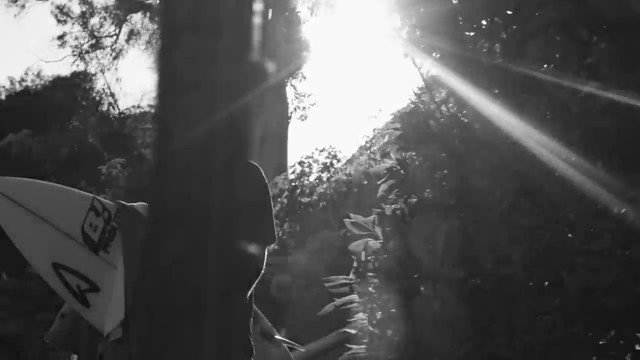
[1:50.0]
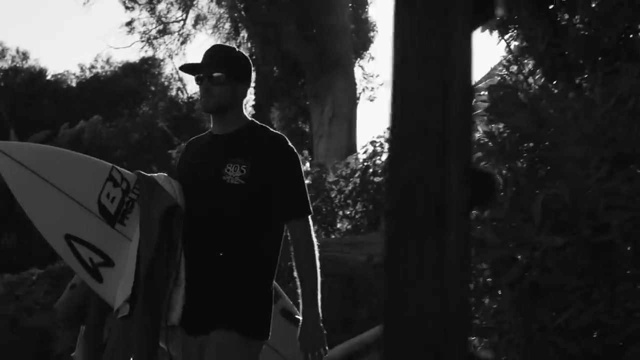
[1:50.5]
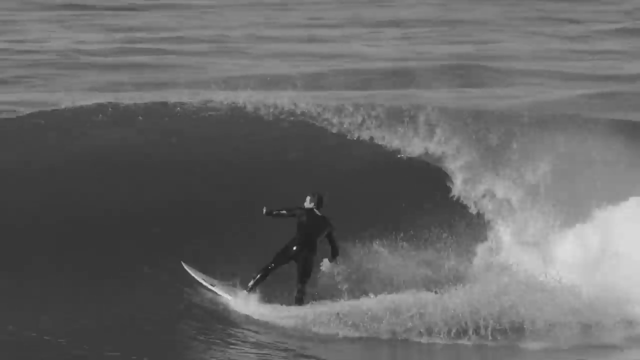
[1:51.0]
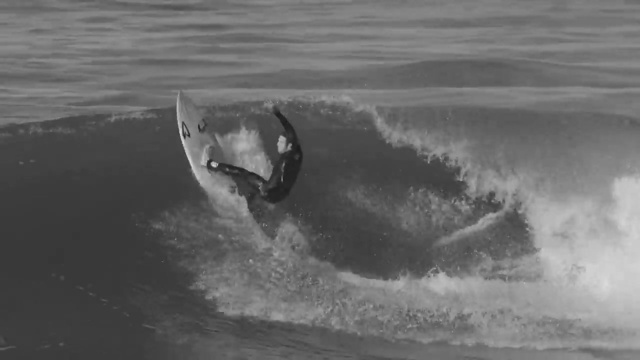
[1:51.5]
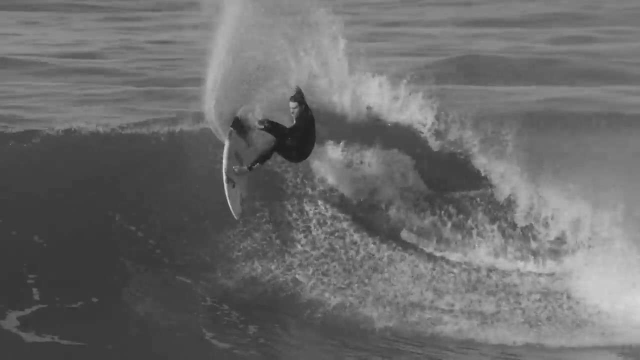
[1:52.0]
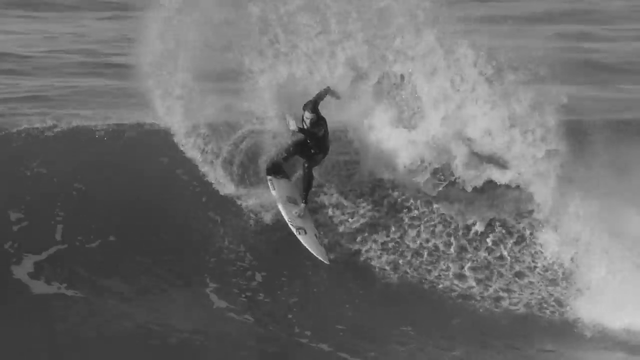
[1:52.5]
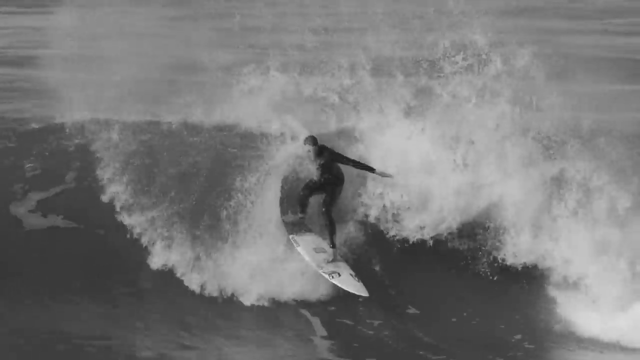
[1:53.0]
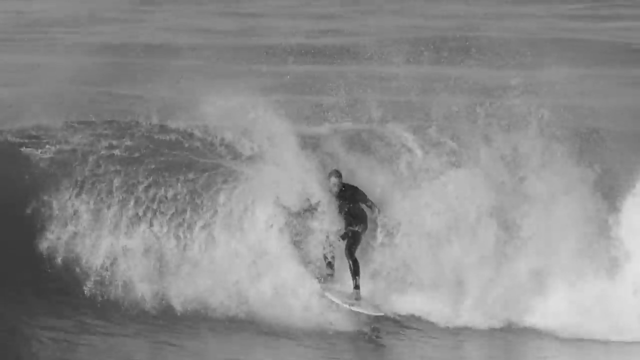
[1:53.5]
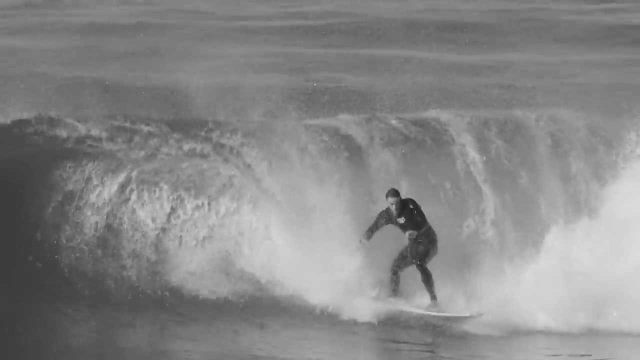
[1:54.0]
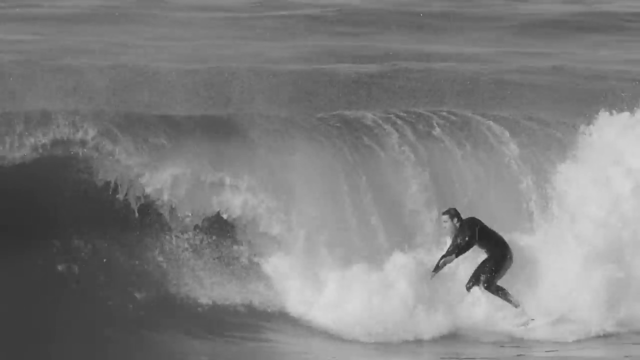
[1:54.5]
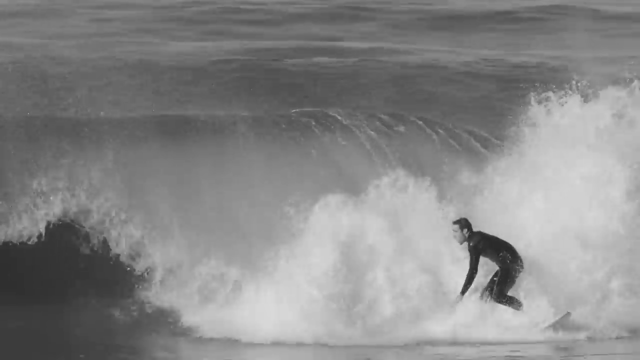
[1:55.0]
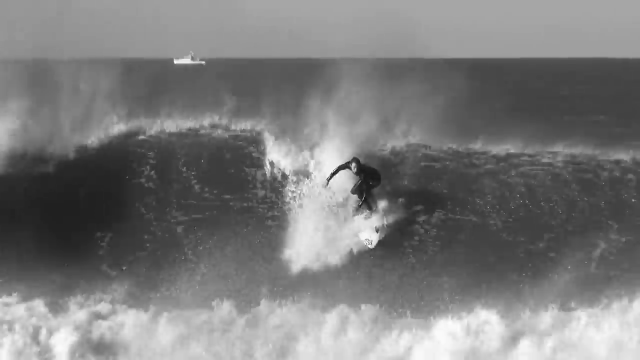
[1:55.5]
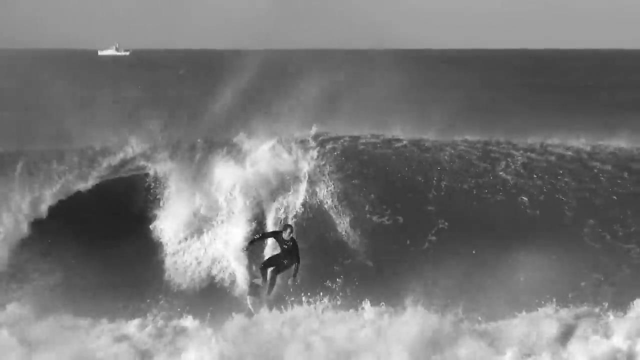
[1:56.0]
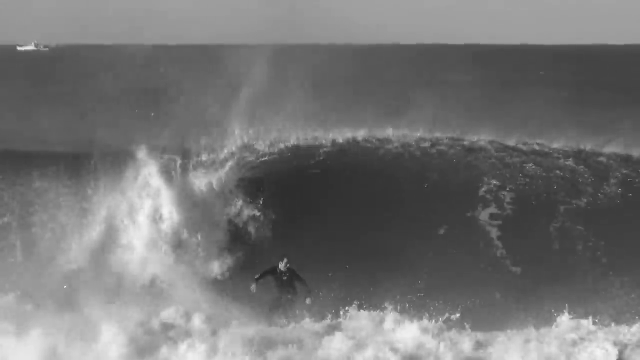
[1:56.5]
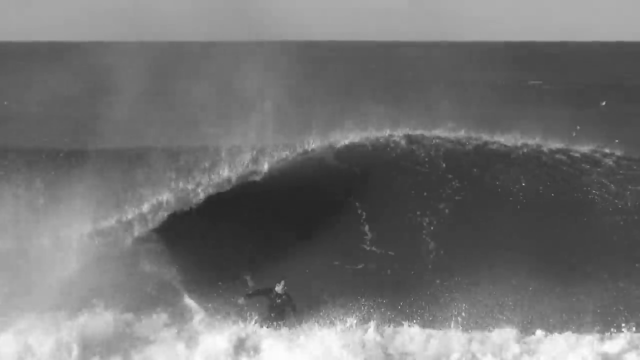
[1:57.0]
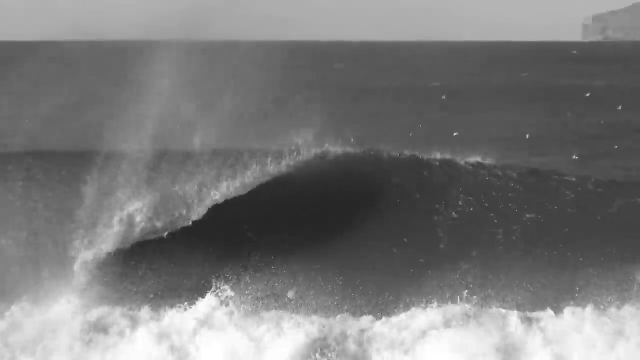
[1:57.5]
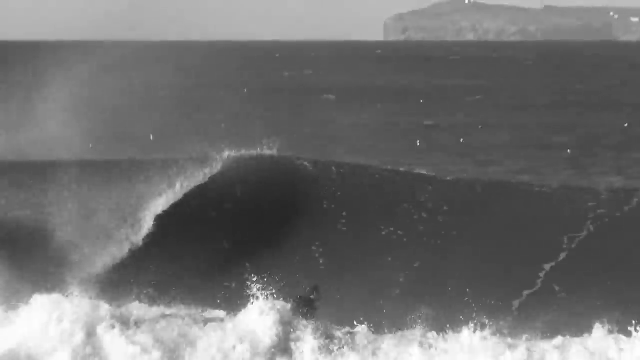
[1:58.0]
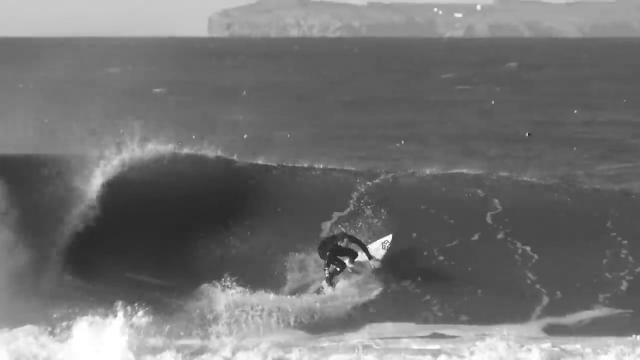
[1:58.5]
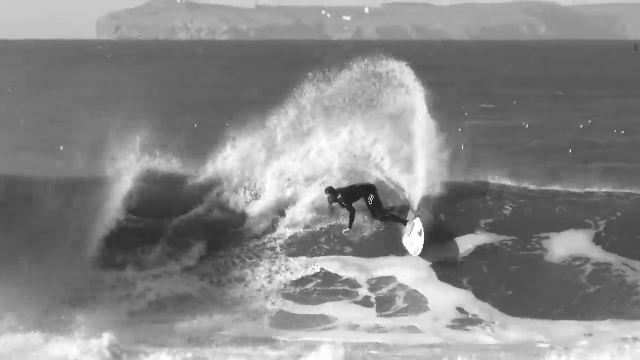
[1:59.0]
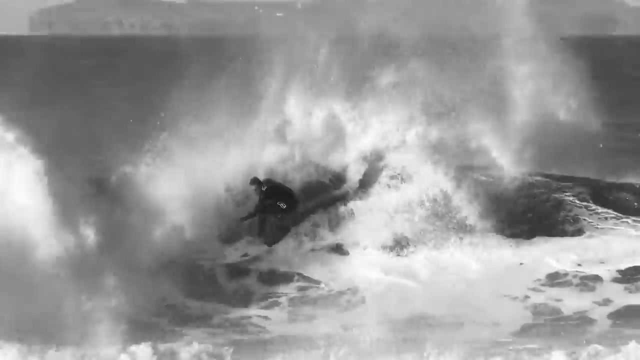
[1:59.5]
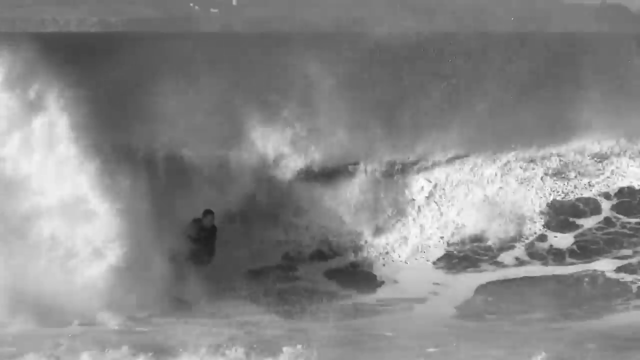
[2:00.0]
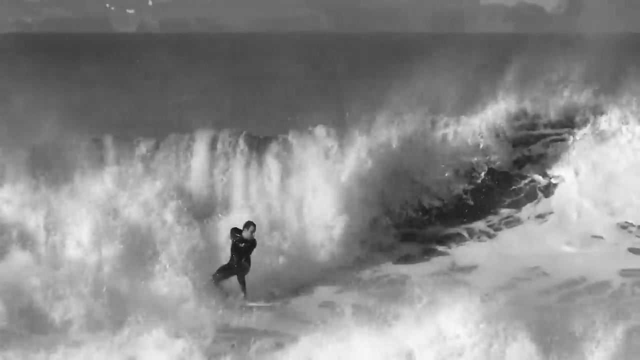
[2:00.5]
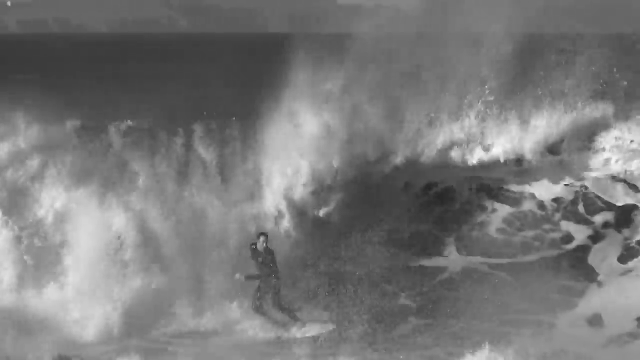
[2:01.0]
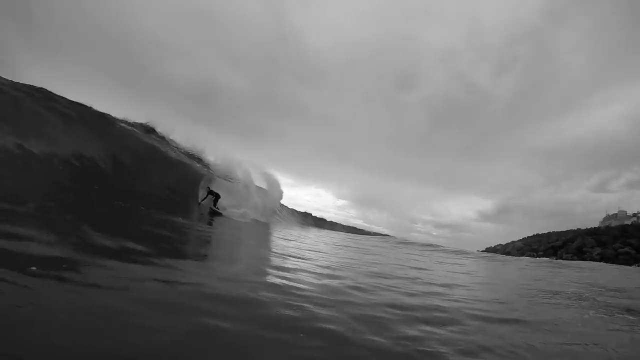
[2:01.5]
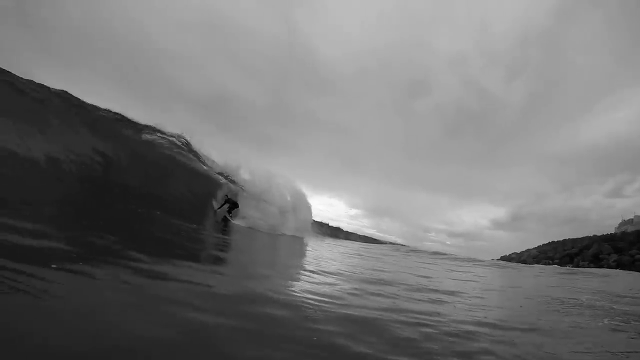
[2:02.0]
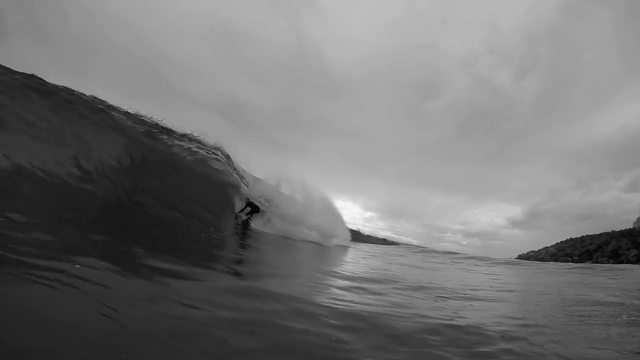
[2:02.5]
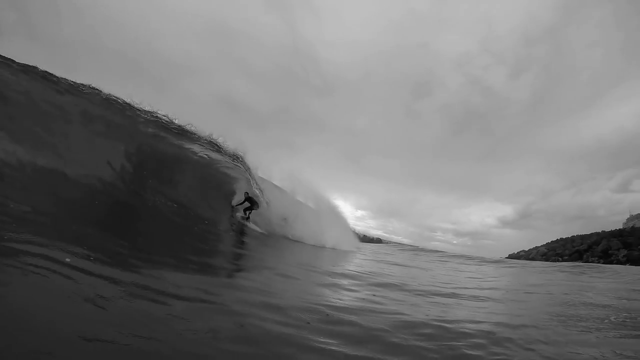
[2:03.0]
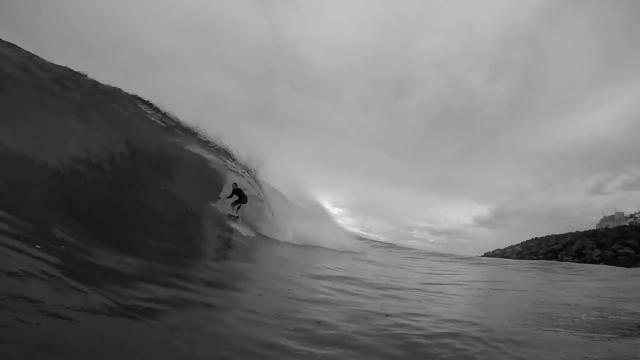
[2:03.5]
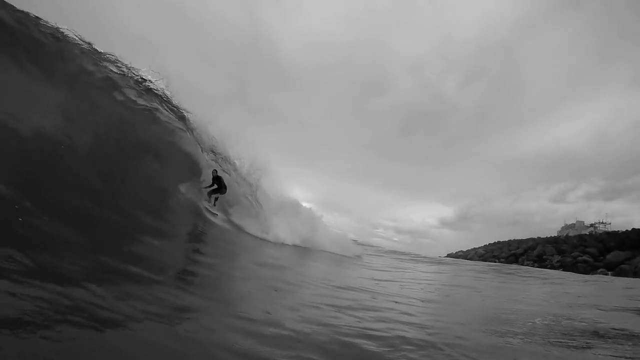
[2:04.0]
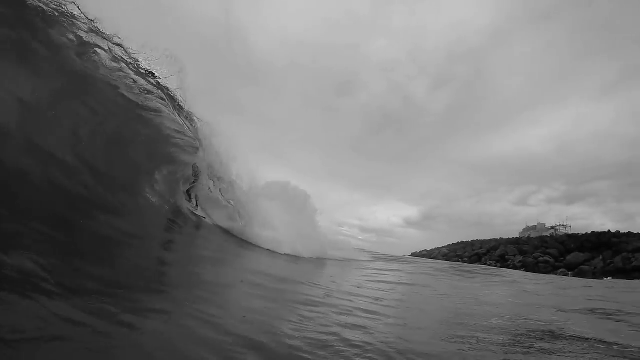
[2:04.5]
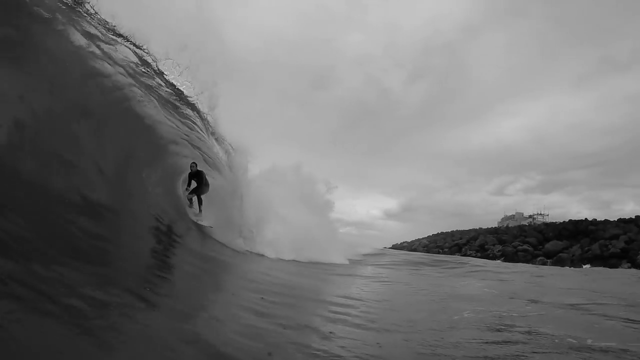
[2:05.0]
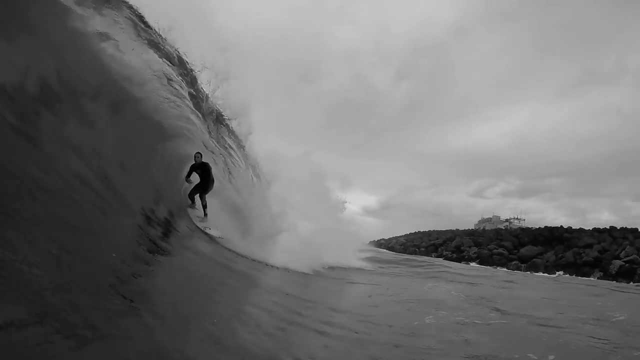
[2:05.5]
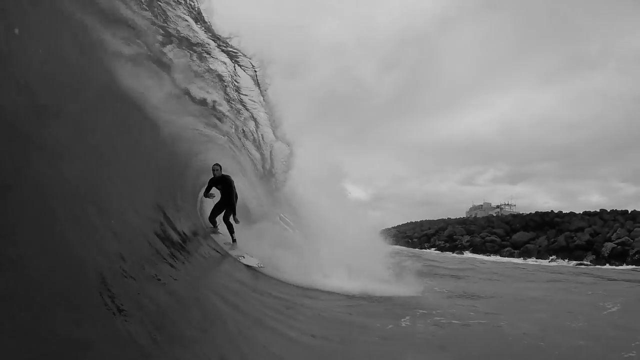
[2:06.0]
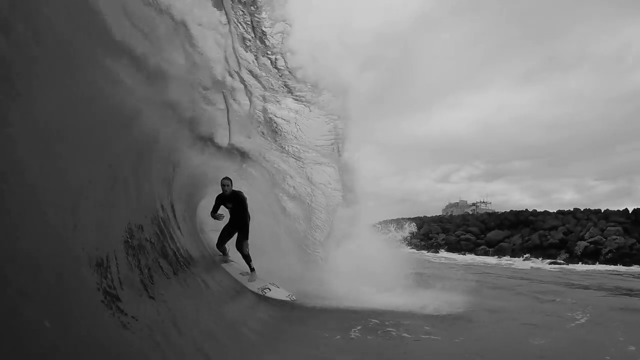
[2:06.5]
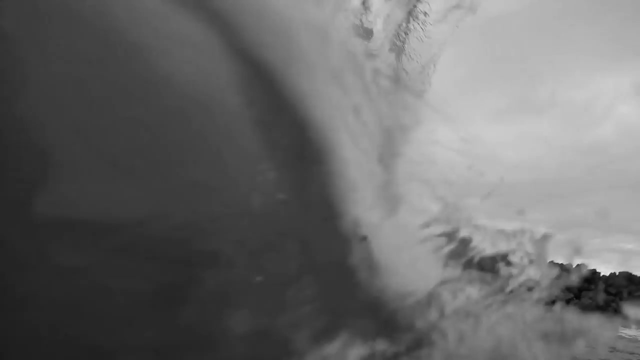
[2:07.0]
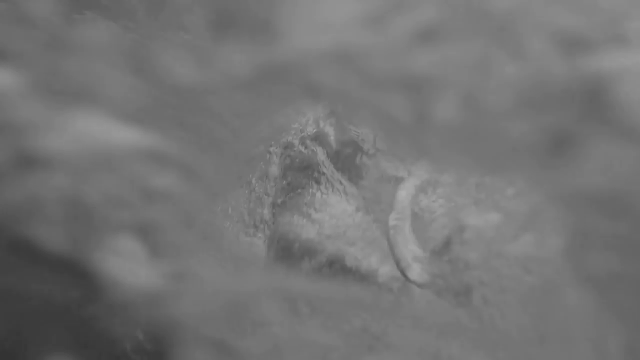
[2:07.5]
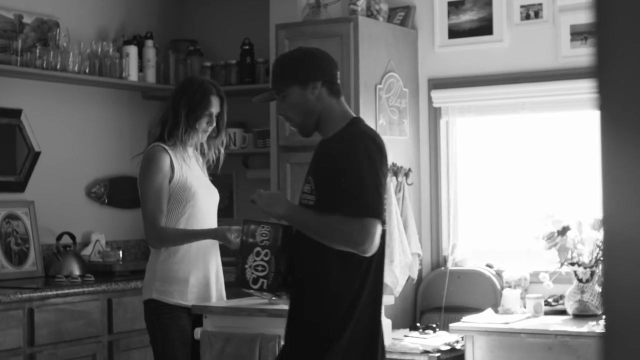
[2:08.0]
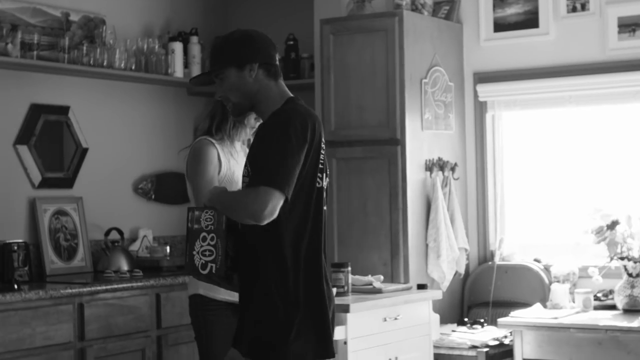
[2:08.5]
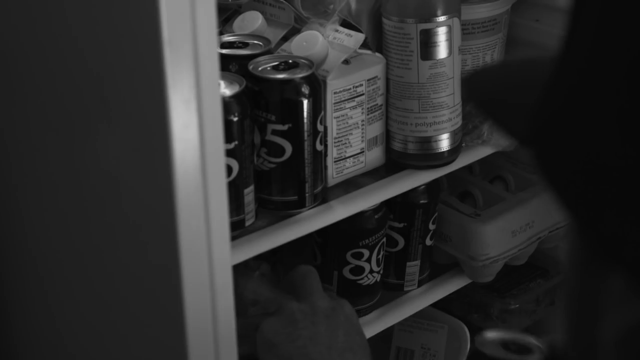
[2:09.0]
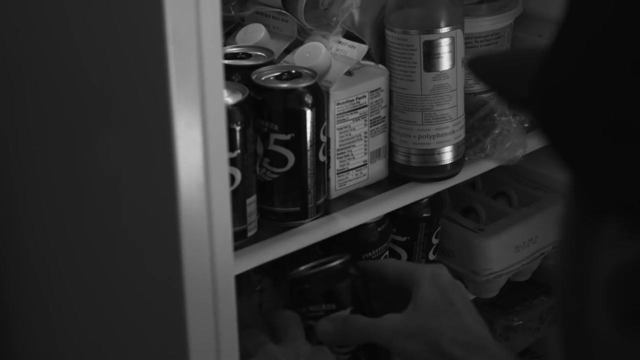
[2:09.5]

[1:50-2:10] A man walks through an area with some palm trees, carrying a surfboard in his right hand. The video immediately switches to a man riding the face of a curling wave, left foot forward and right foot back, facing the wave and riding from right to left while looking forward. He goes to the tip of the wave, does a 180 kick and drops back down the face. Next the man rides another wave, this time going from left to right and looking toward his left, which is the viewer's right; he drops in and then curls on the face of the wave. A view from the water shows a videographer in the water filming the man riding the face of the wave with the wave collapsing behind him; the man comes from the distance toward the foreground, from right to left, and rides the tube. Then the man is inside with his girlfriend, walking around in his baseball cap; in the kitchen he opens a case of 805, and they organize cans in the cupboard.